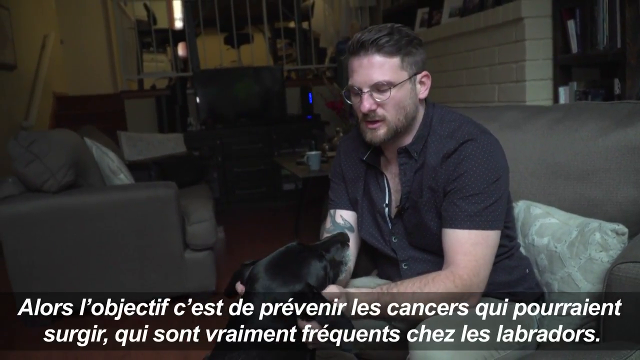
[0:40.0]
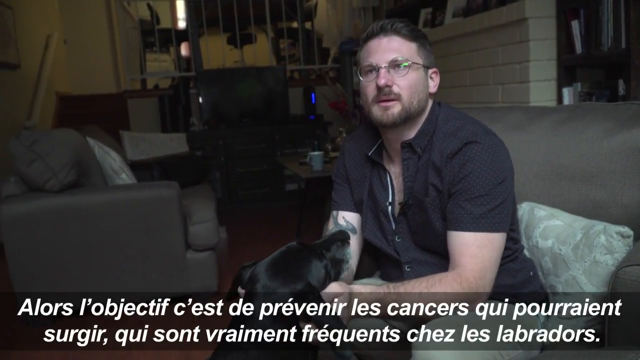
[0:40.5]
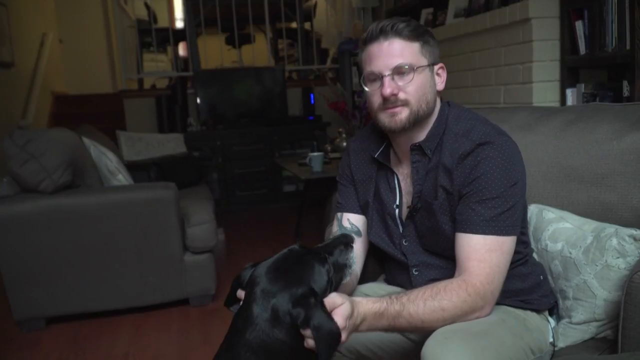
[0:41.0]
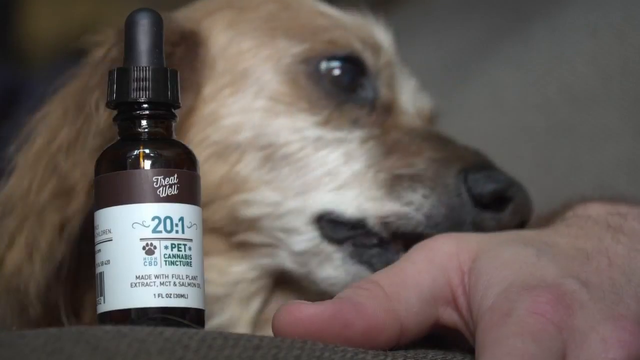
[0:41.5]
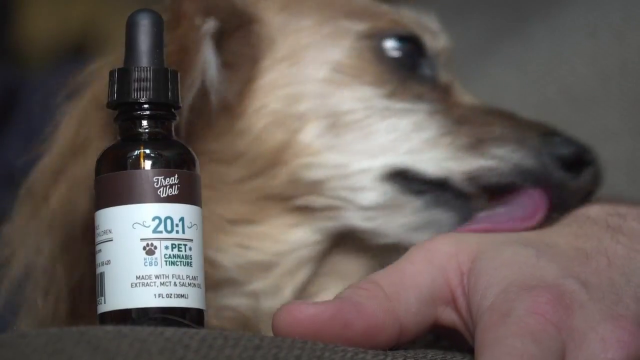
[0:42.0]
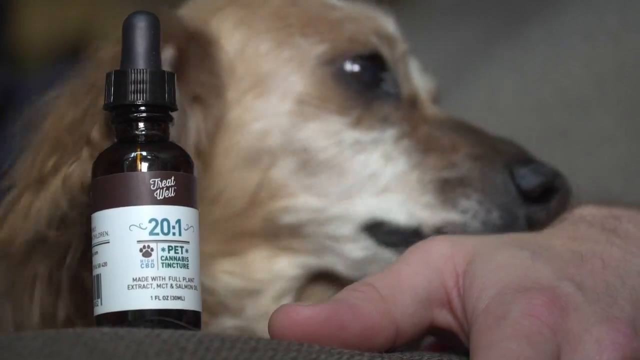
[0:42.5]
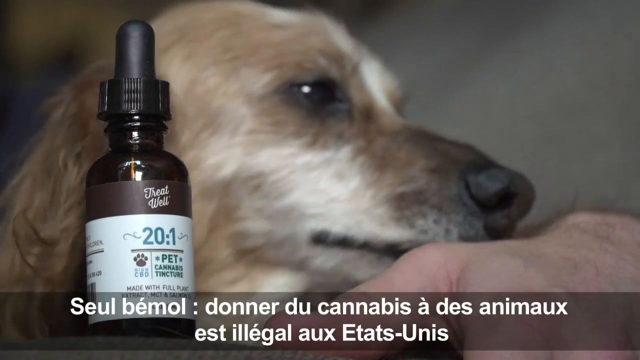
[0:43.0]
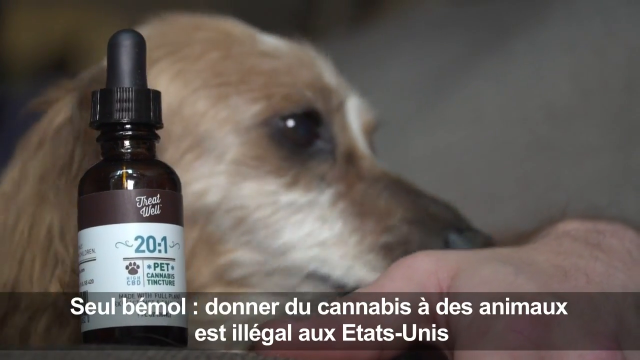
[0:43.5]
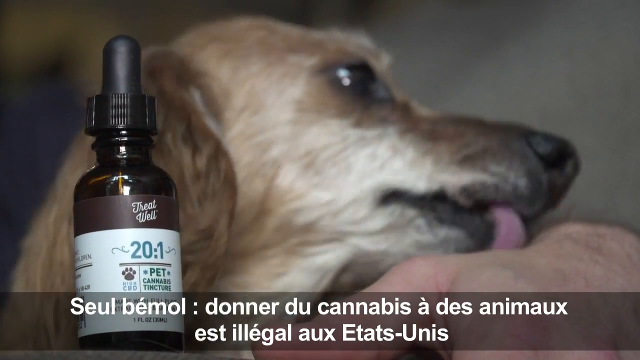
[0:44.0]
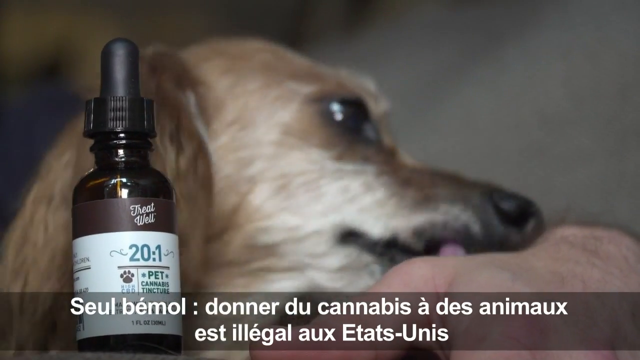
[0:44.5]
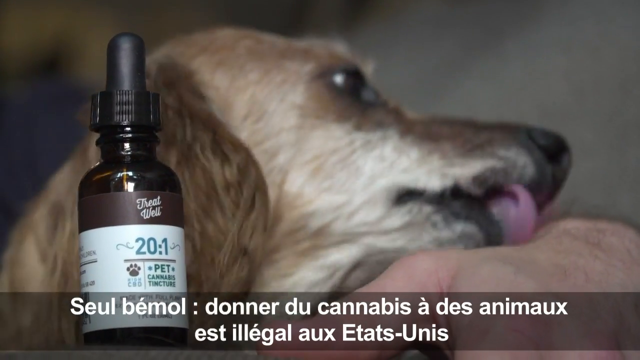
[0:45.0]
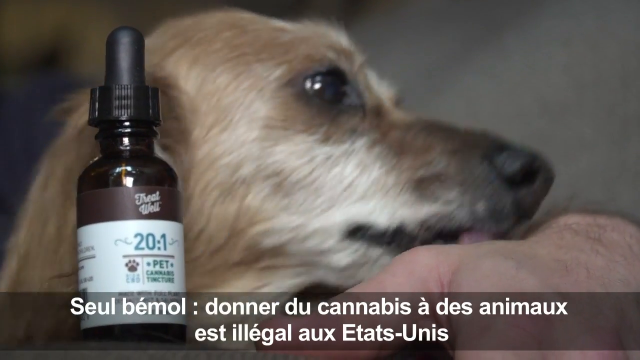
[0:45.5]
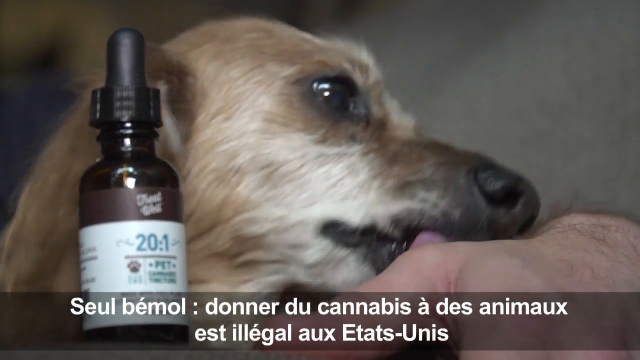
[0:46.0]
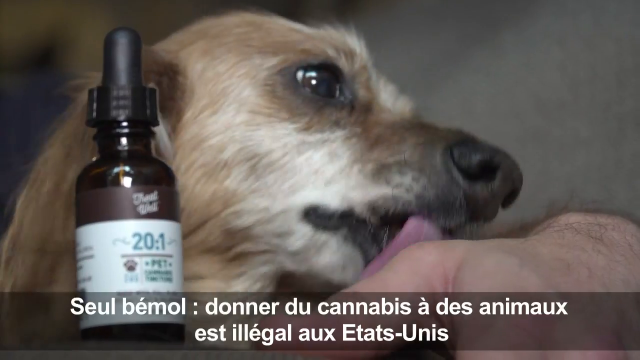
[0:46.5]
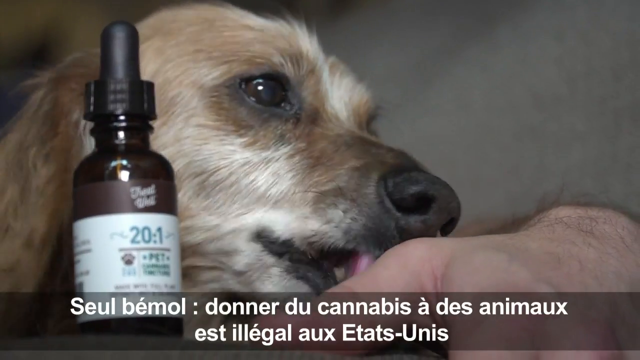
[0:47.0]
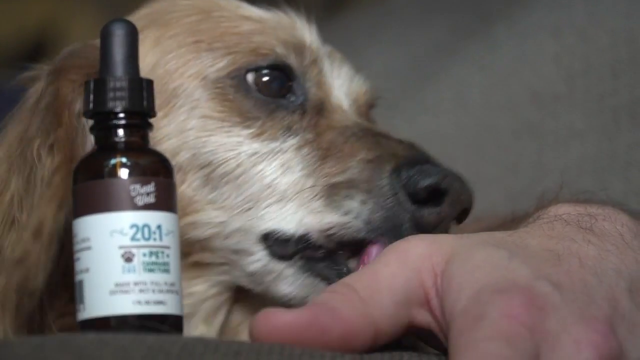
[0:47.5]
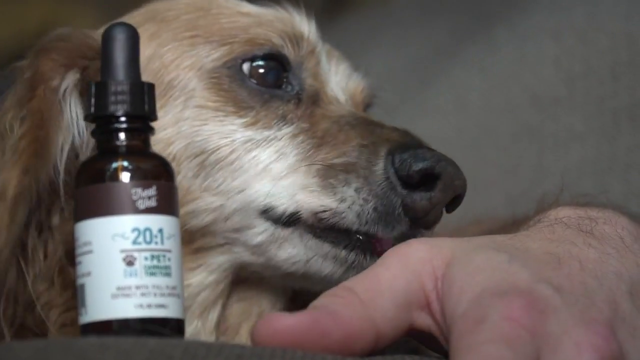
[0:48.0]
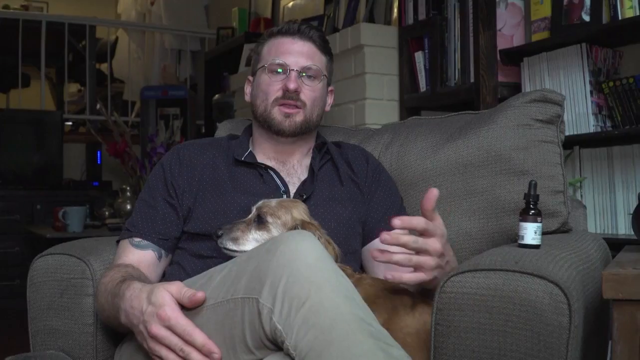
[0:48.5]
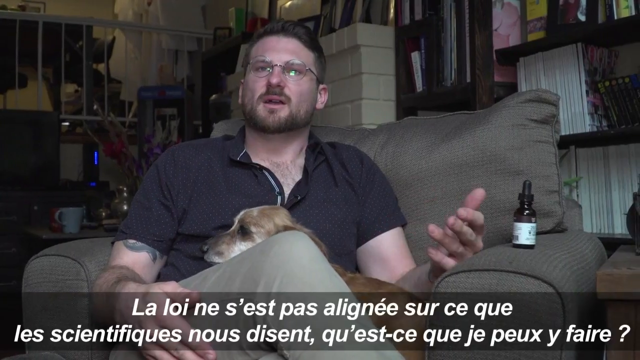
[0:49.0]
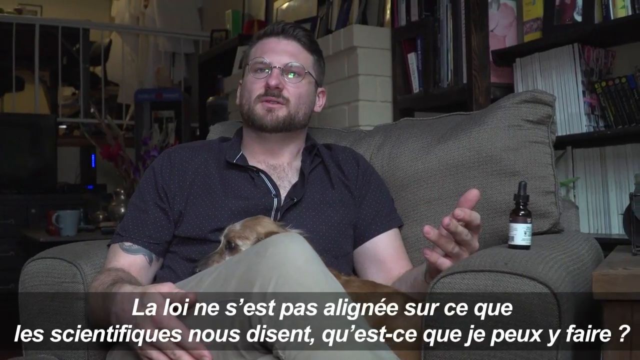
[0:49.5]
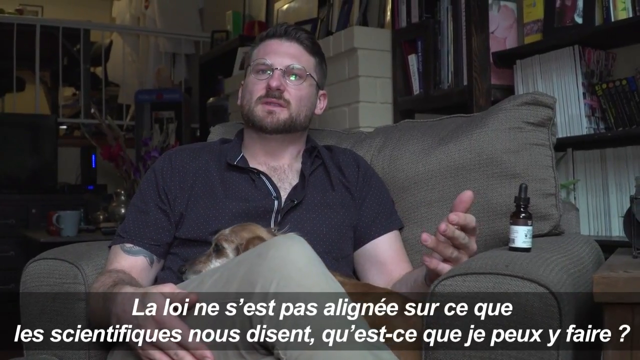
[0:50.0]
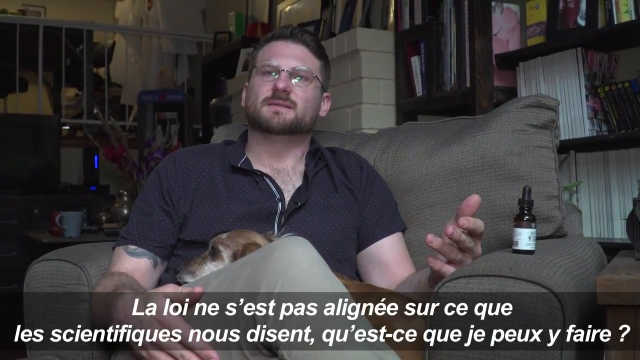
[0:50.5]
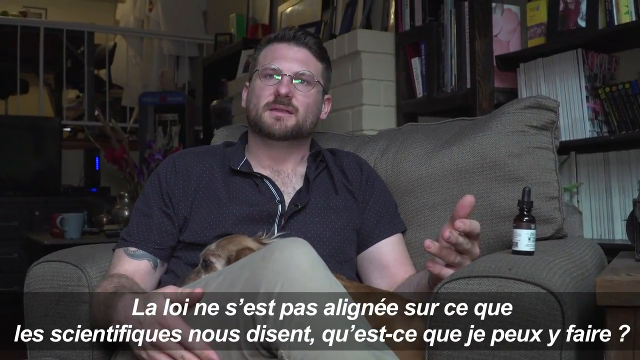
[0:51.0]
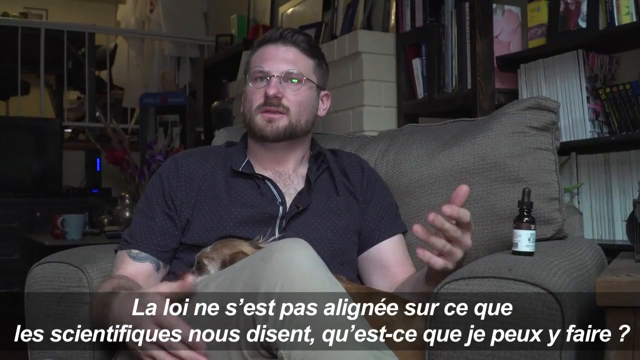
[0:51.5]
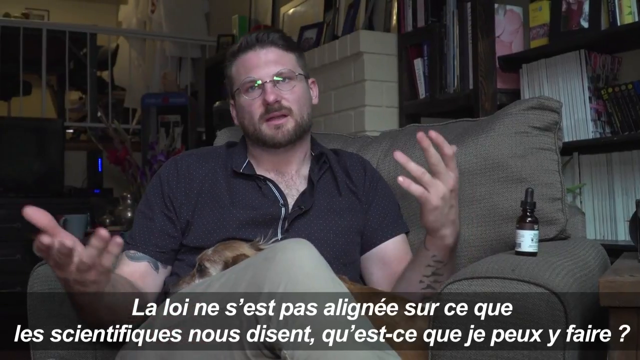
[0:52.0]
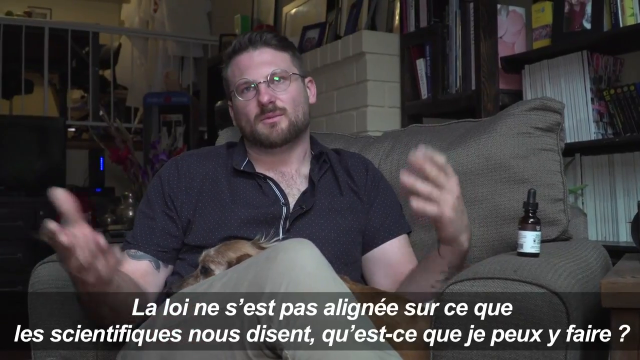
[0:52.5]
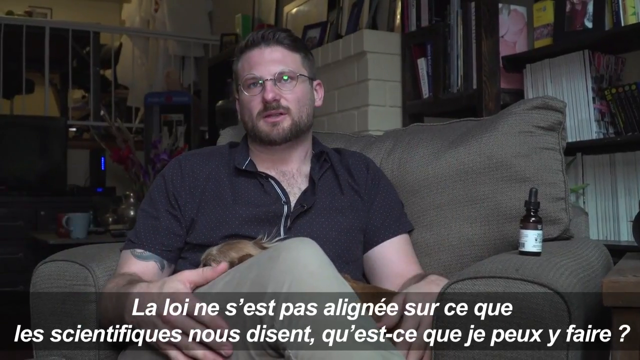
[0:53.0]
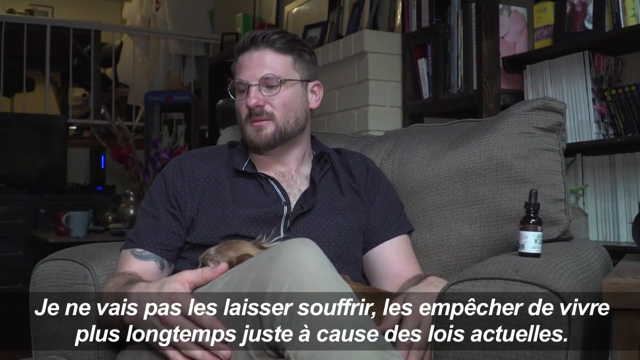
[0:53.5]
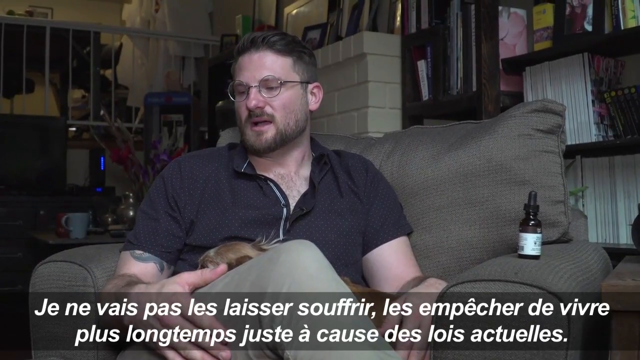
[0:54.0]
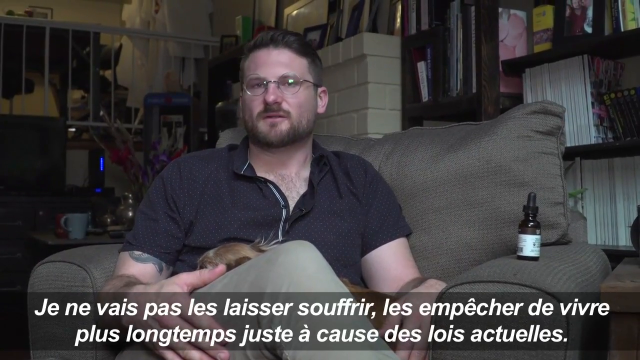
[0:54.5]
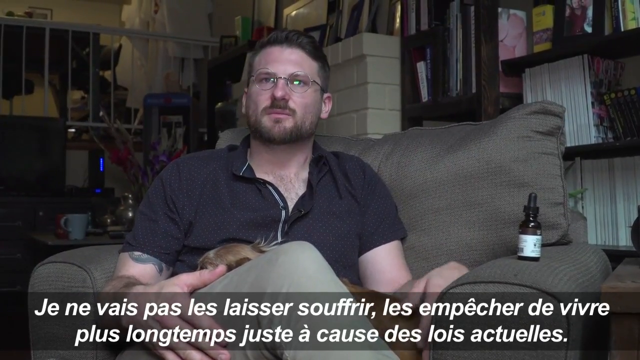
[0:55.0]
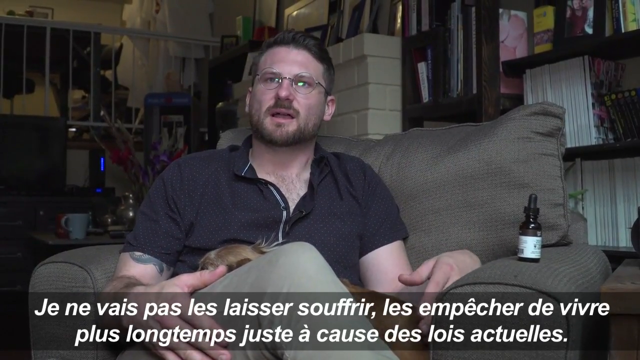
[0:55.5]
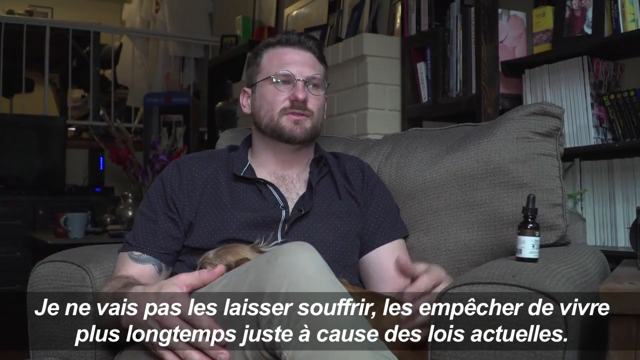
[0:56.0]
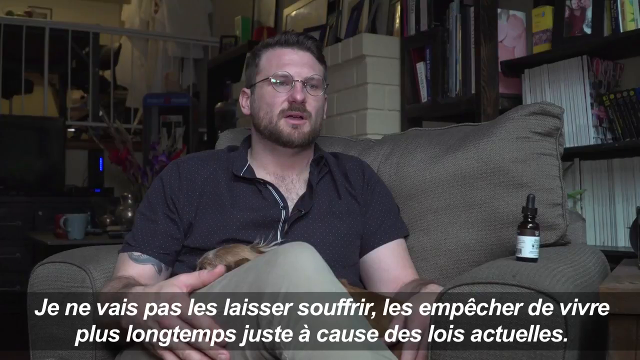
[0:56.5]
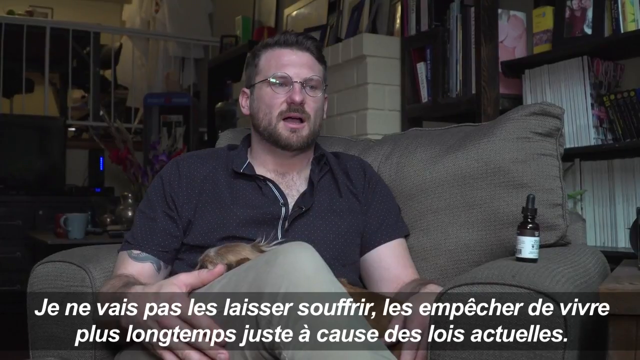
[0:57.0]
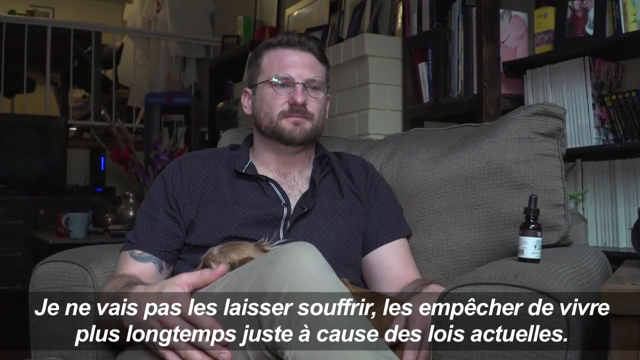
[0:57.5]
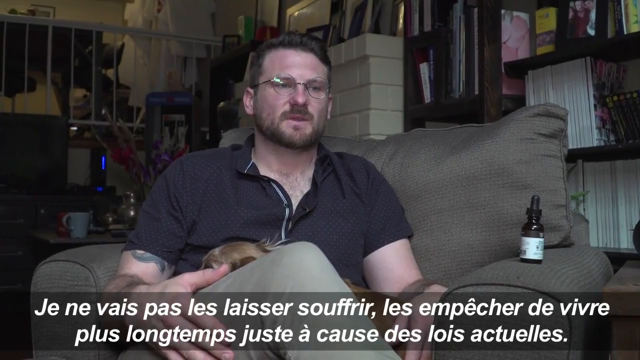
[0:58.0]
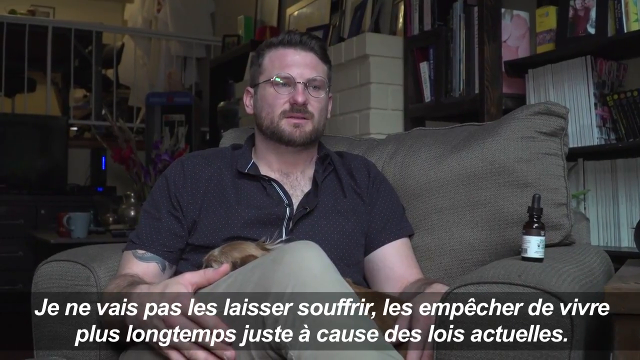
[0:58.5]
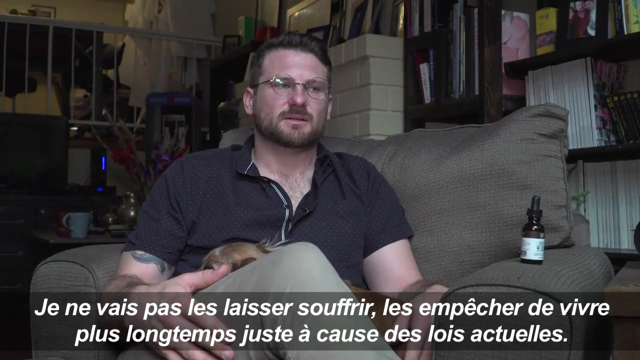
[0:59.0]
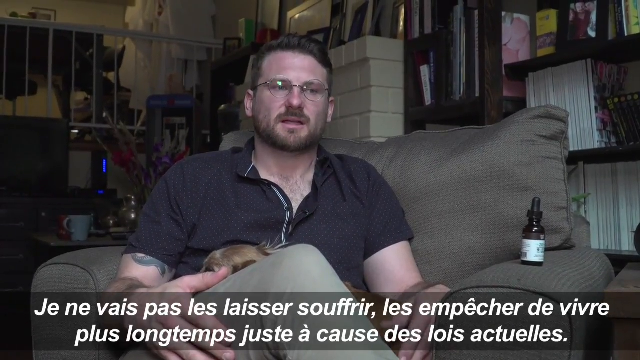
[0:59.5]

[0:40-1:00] The man, described as a young man in his mid-40s with dark hair and dark eyes, glasses, a mustache and a beard, wears a short-sleeved, button-down black shirt. A mid-sized black dog with gray on its muzzle is in front of him. His name appears as "Brett Hartmann", with "consultant en cannabis" underneath. The French caption at the bottom of the screen reads "alors l'objectif c'est de predenir les cancers qui pourraient surgir qui sont vraiment frequents chez les labradors", which seems to be about preventing cancers in Labradors.